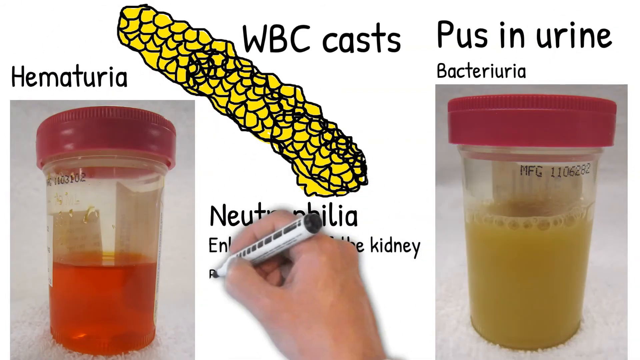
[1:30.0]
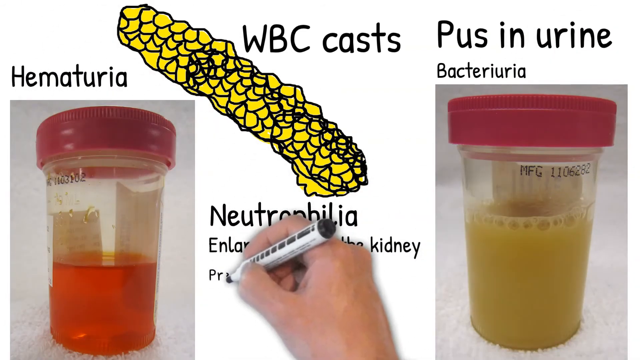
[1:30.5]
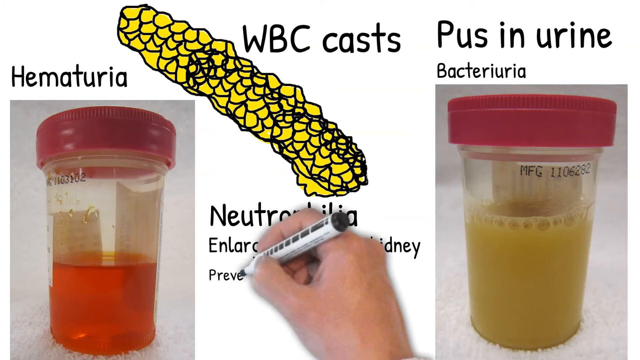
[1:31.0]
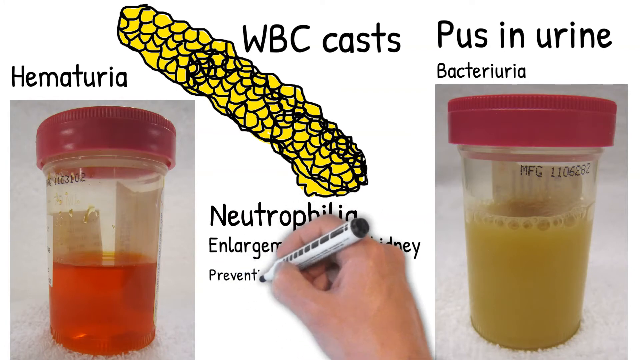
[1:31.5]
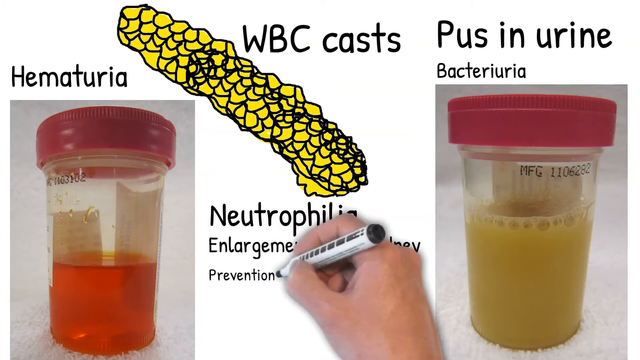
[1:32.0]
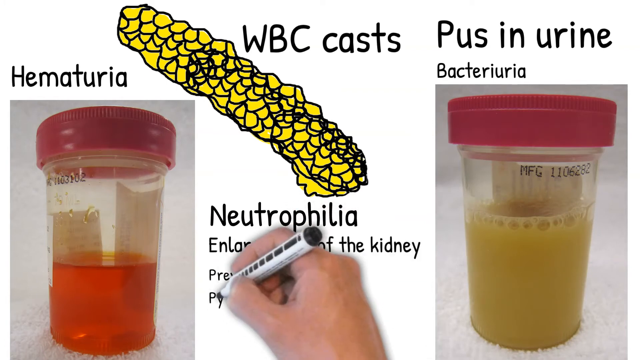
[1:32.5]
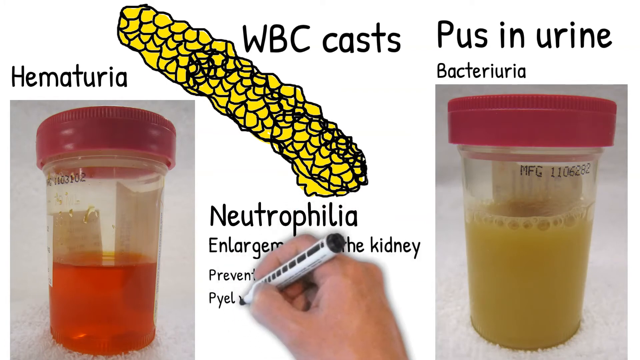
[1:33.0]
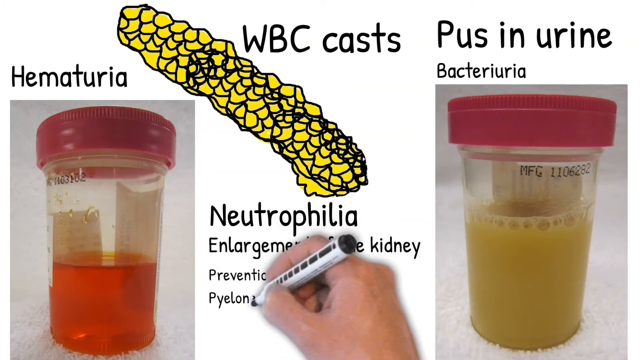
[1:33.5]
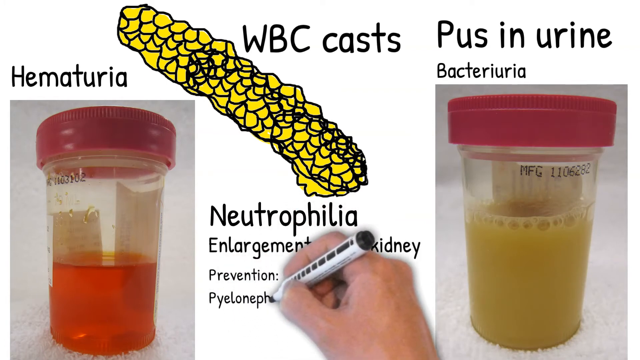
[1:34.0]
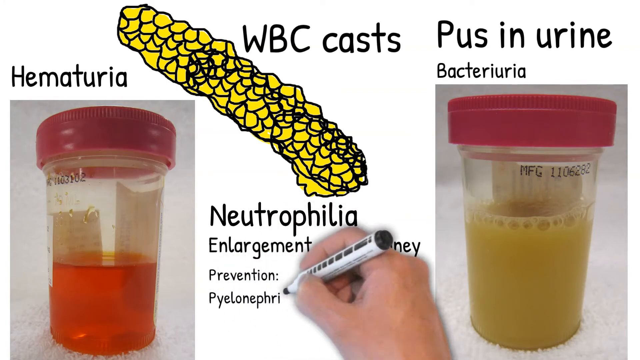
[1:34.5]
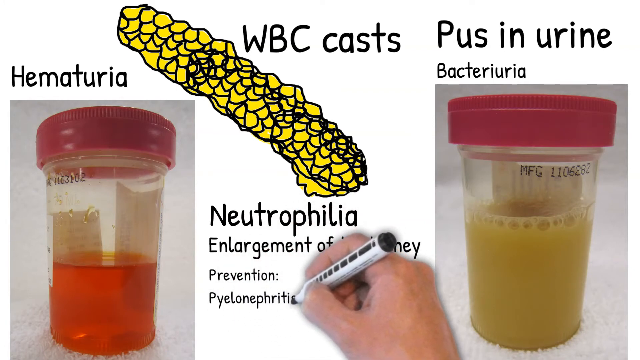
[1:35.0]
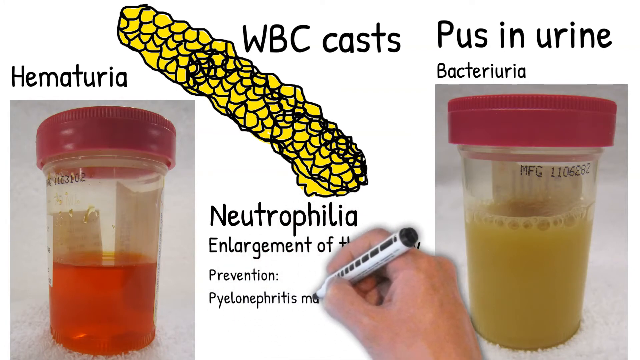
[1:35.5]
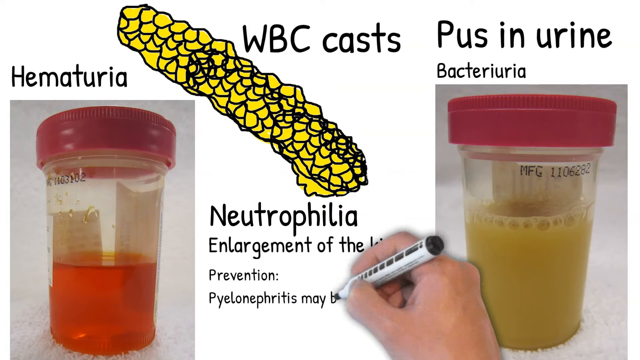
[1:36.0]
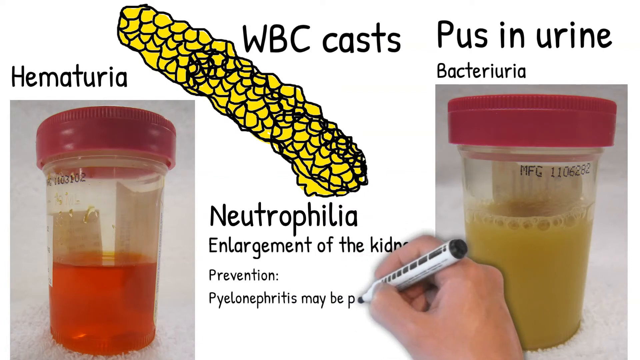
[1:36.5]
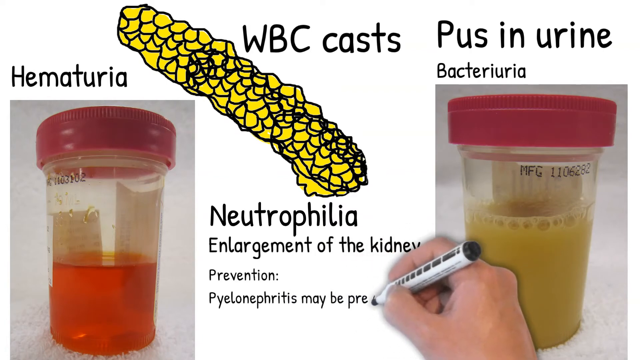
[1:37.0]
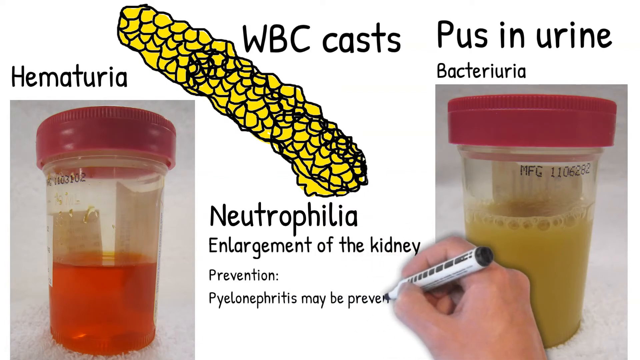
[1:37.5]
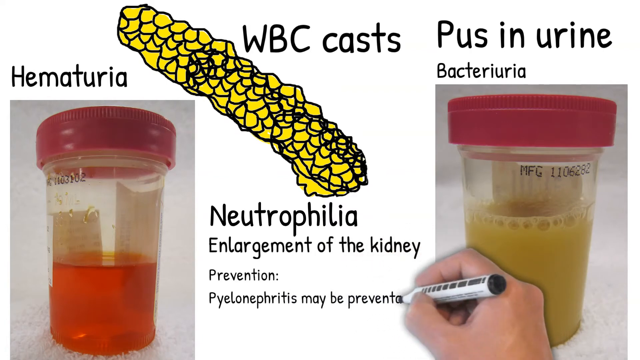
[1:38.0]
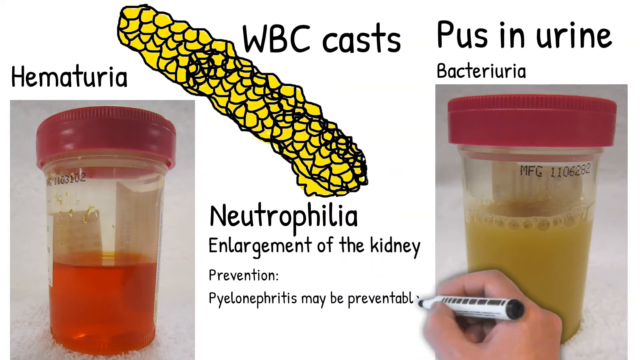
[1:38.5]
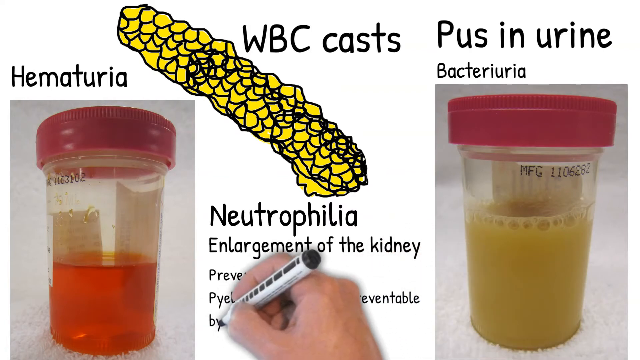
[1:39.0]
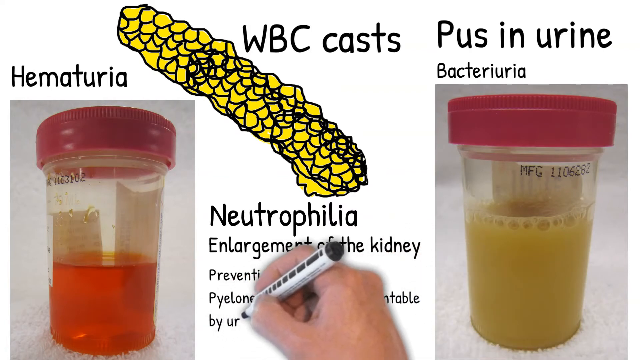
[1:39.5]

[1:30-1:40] A picture of a urine sample has "hematuria" written over it, and it looks like a darkish orange color. A yellow mass in the middle is labeled "WBC cast", with "neutrophilia, enlargement of the kidney" underneath. Another urine sample, a very concentrated yellow, is labeled pus in the urine, with "bacteriuria" written in black underneath. The man continues writing "prevention" and "pyelonephritis may be preventable", followed by something about urine that is not fully legible.